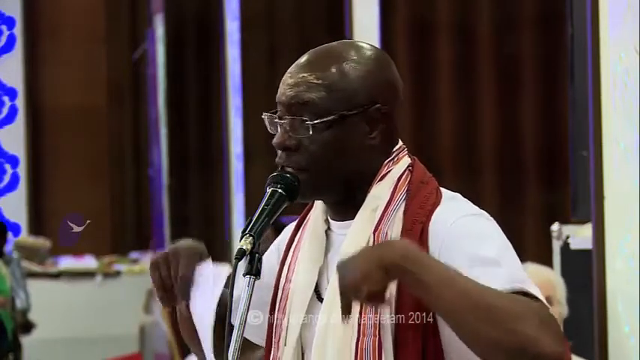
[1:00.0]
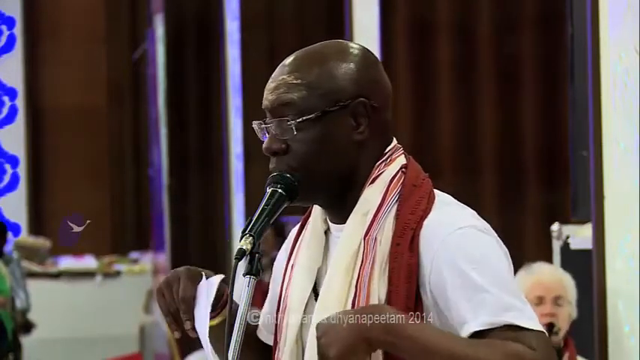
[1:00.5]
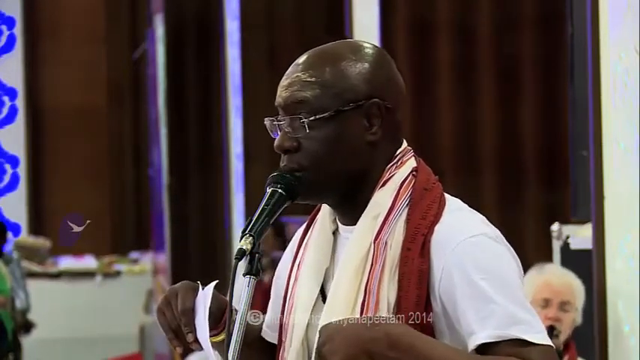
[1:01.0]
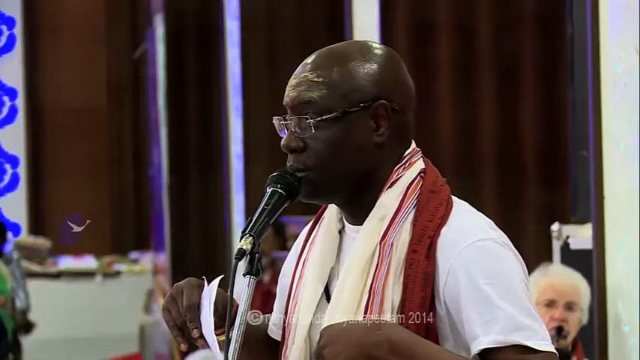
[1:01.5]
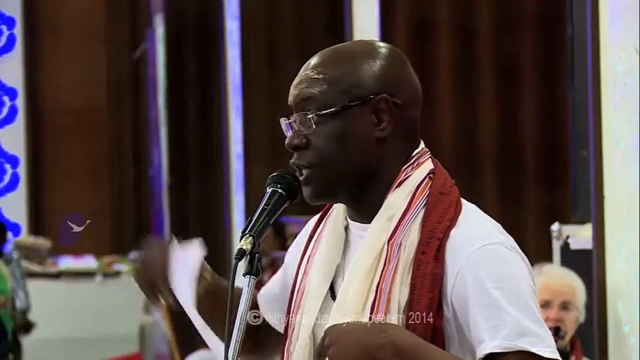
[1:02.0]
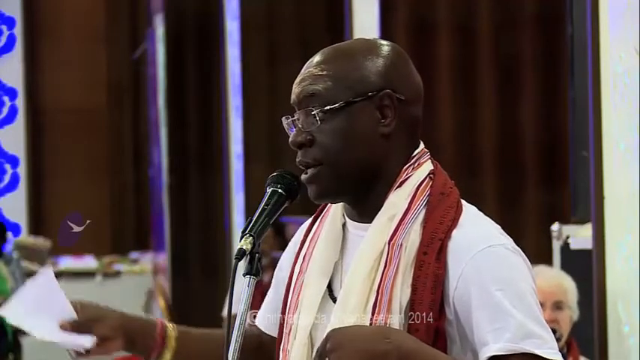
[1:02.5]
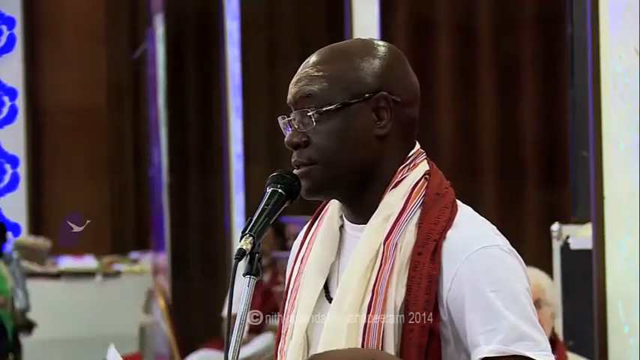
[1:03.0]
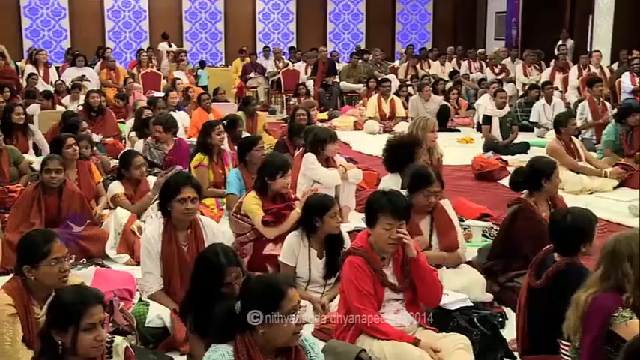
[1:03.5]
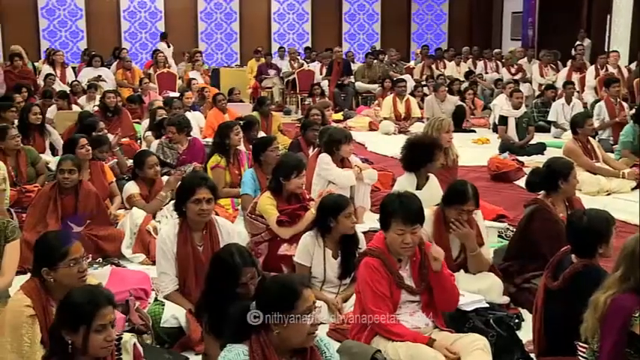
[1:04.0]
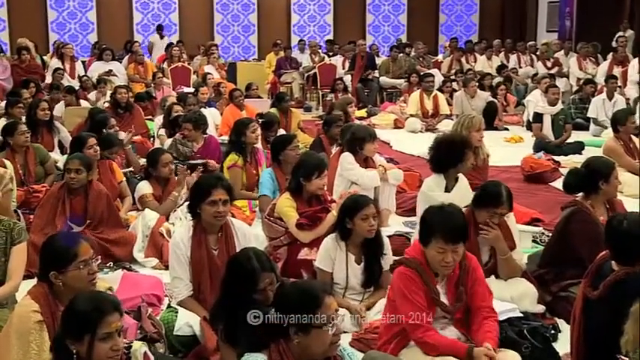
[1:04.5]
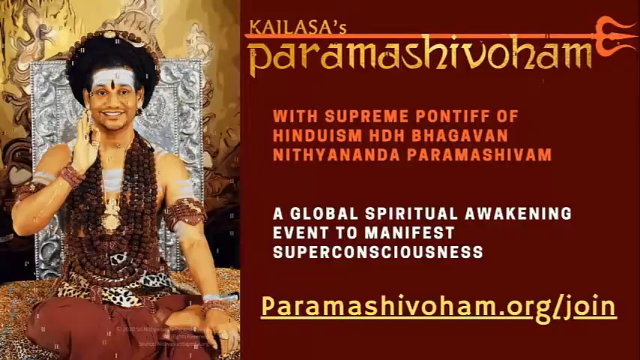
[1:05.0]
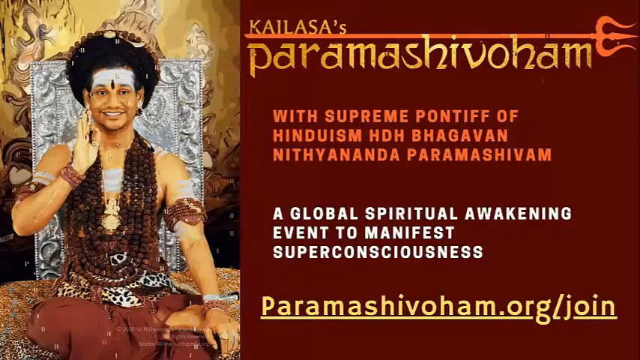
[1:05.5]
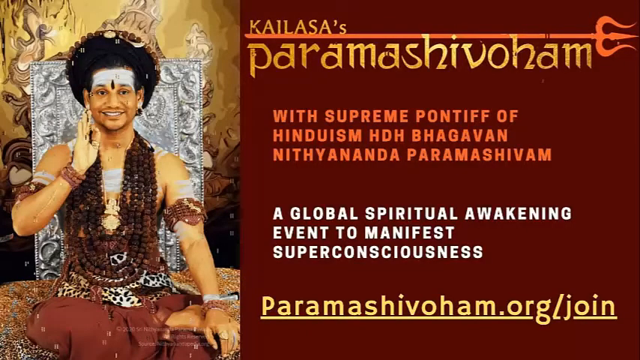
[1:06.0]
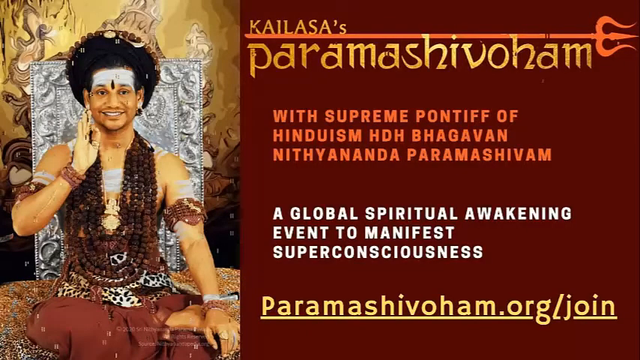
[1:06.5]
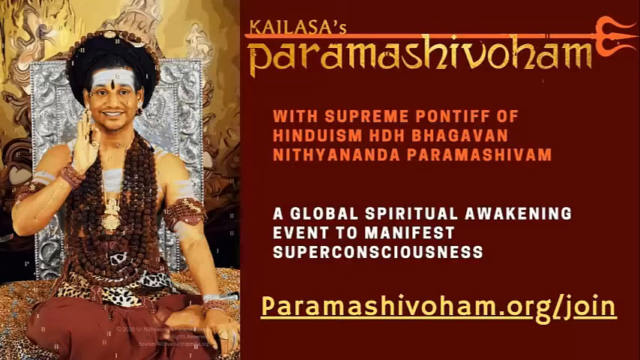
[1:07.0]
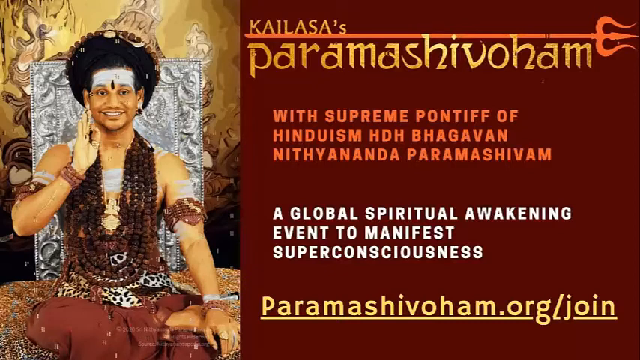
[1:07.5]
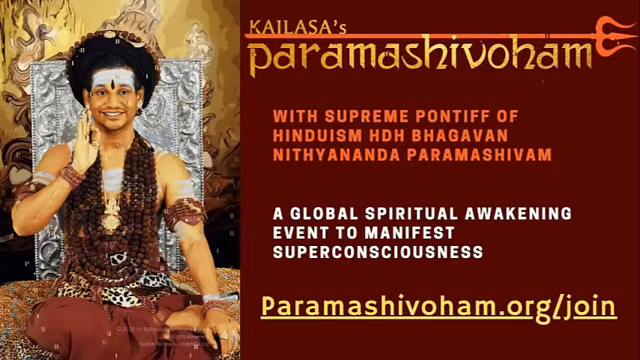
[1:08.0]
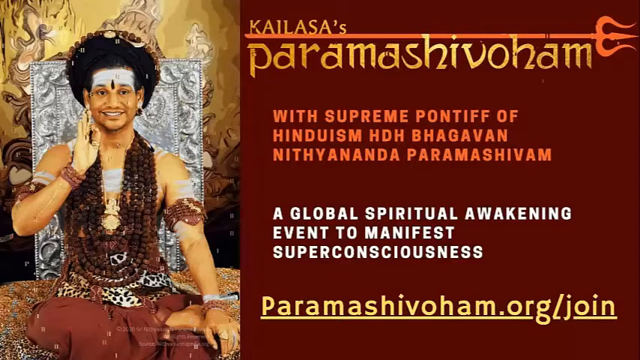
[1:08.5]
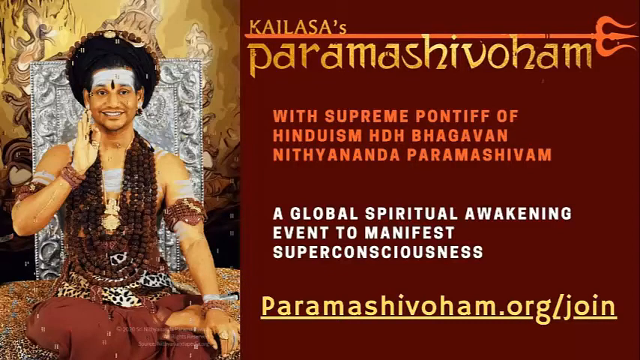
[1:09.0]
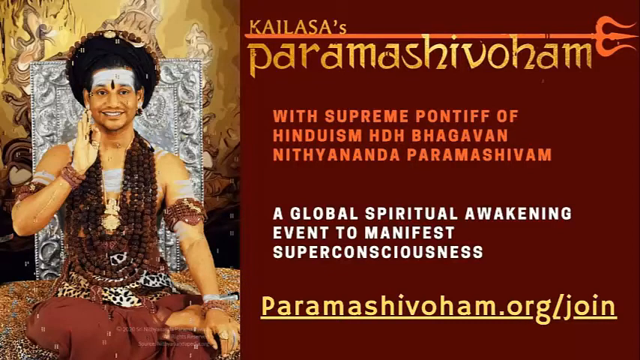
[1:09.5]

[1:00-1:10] The video is copyrighted as Nityananda Dhyana Peetham, concerns a spiritual awakening, and presents Jorge Koel, spelled C-o-e-l-h. He is a very dark-skinned Black man who seems to be trying to appear Hindu. When he turns his head, a lot of sandalwood paste is visible smeared across his forehead. He wears a rust-colored scarf around his neck that may have some Sanskrit words on it, with beige areas and stripes in rust and coral, and a gold watch. He talks to an audience in a room with very dark rust-colored, maroon curtains, holding a piece of white paper in his right hand but switching hands, and uses his hands to emphasize things. A shot shows a large group of people sitting cross-legged on the floor, apparently in India, mostly people who look Indian, along with a few white people, a few blonde ladies, and a couple of people who look Tibetan. It then cuts to a final screen with text including "kailasa's" and "para ma shivoham", then "with supreme pontiff of Hinduism HDH Bhagavan Nityananda para ma shivam a global spiritual awakening event to manifest super consciousness" and "para ma shivoham org/Join". A picture of a guru appears on the left. He wears many bead necklaces made from plant seeds, called rudraksha, has a lot of white across his forehead and a teardrop-shaped tikka in the middle of it, wears some traditional jewelry, and has something around his upper arms that looks kind of beaded. He wears some sort of headdress made of rudraksha that rises up somewhat like a Tudor women's headdress.